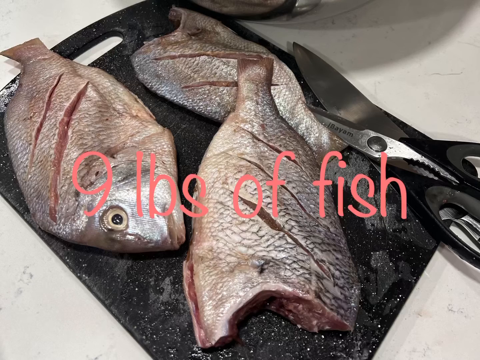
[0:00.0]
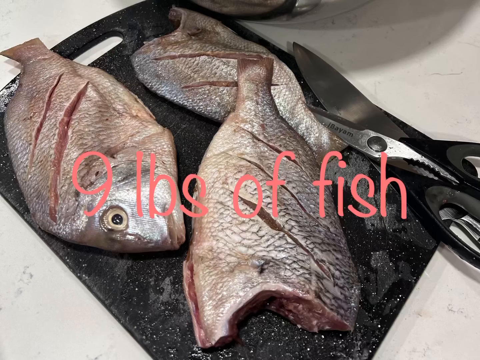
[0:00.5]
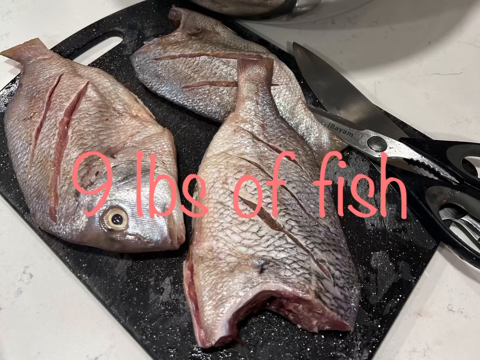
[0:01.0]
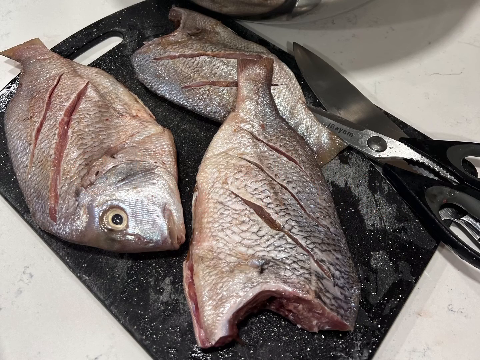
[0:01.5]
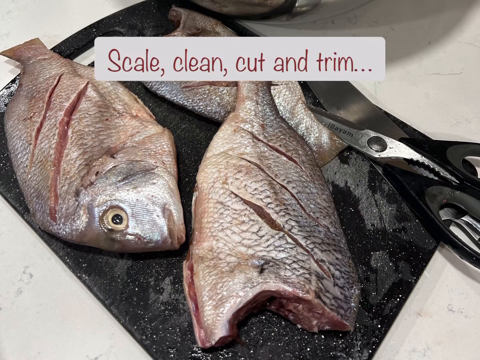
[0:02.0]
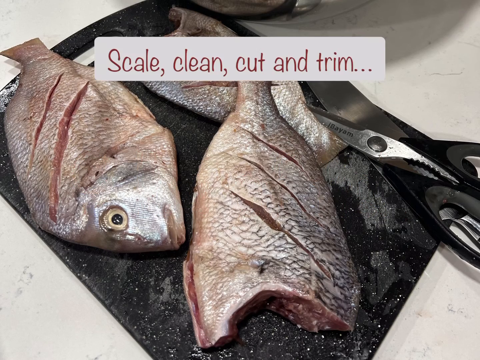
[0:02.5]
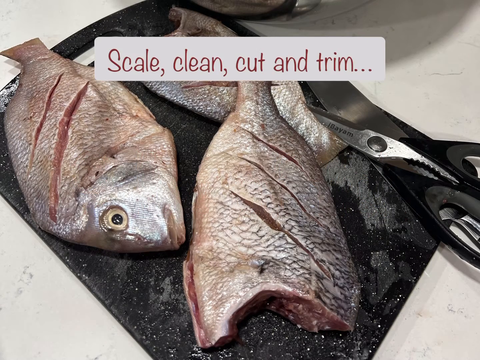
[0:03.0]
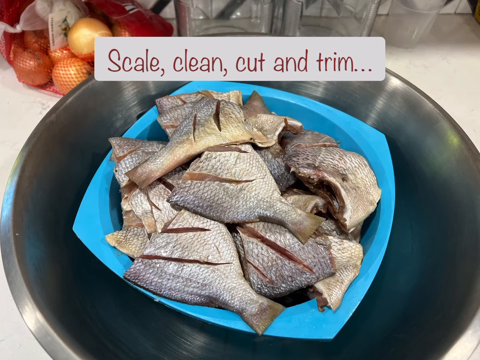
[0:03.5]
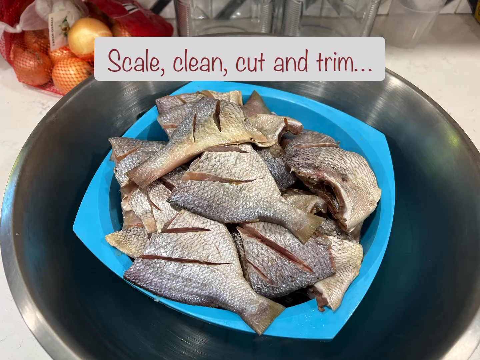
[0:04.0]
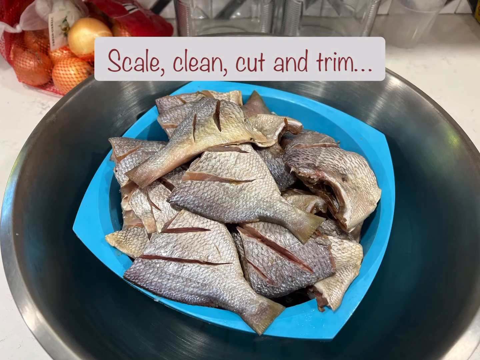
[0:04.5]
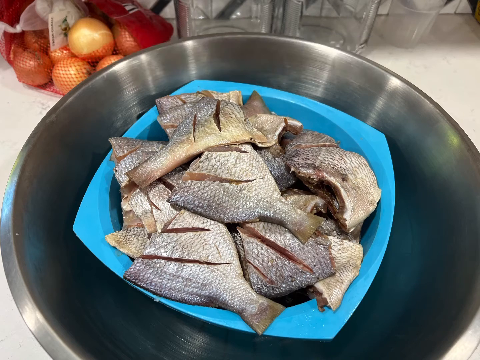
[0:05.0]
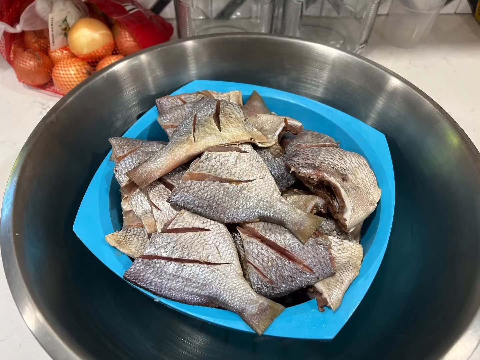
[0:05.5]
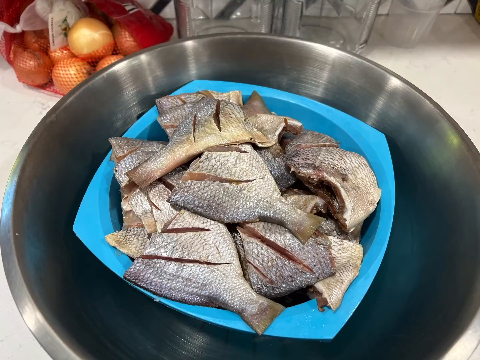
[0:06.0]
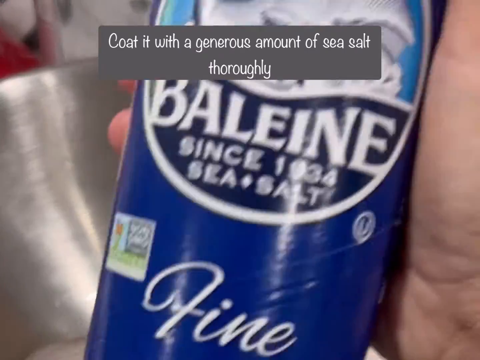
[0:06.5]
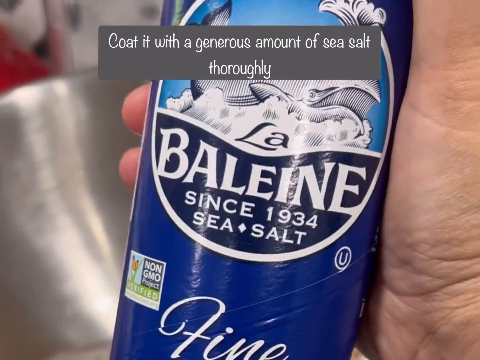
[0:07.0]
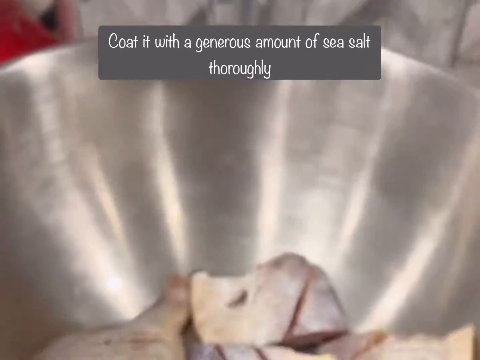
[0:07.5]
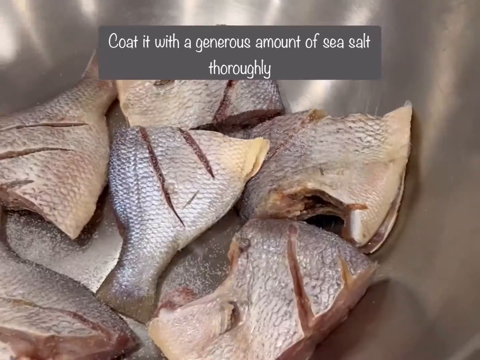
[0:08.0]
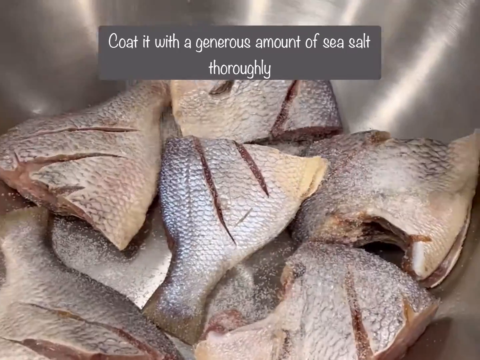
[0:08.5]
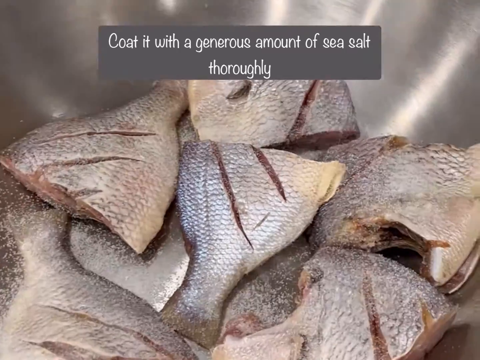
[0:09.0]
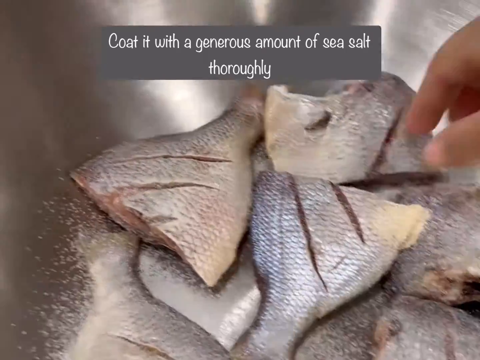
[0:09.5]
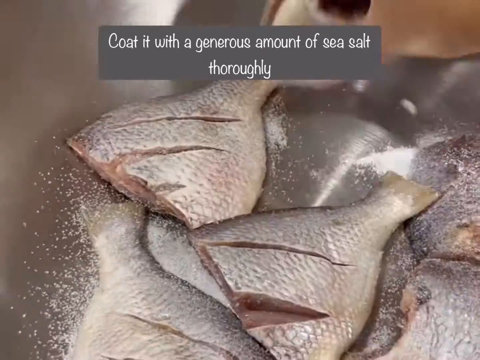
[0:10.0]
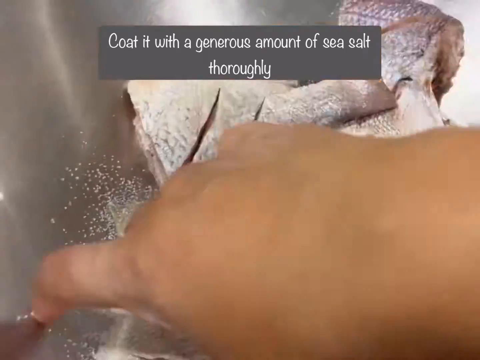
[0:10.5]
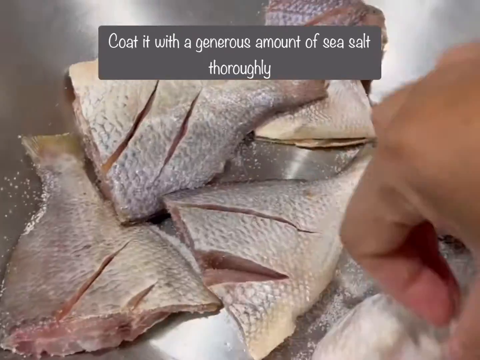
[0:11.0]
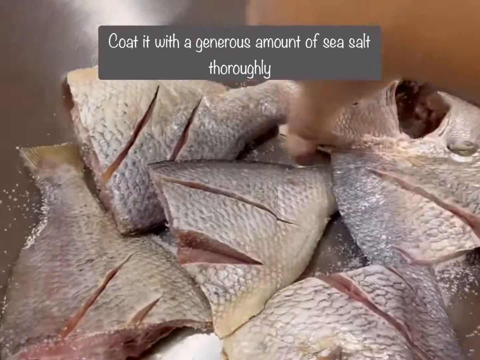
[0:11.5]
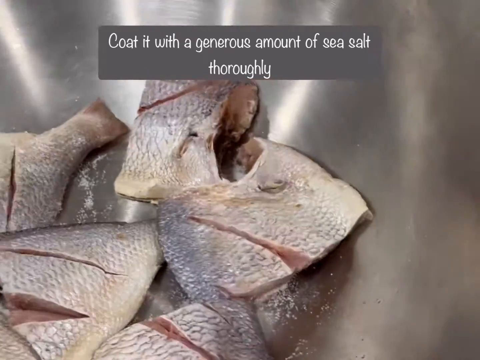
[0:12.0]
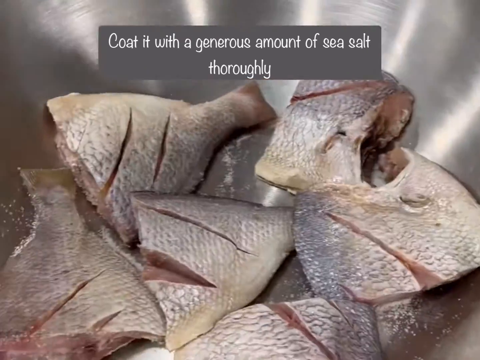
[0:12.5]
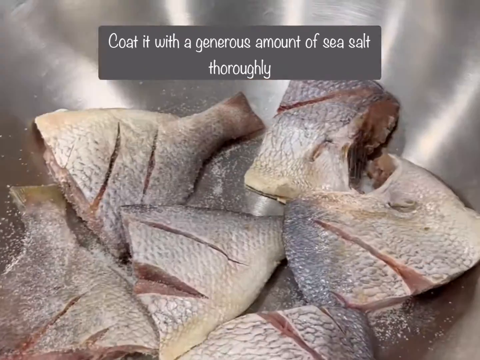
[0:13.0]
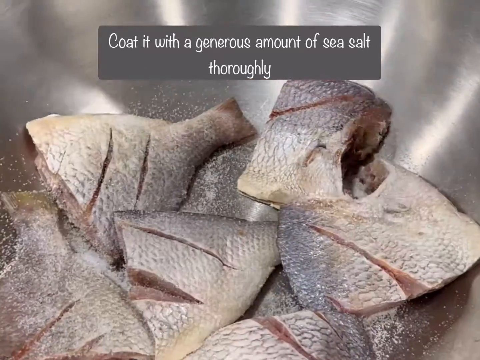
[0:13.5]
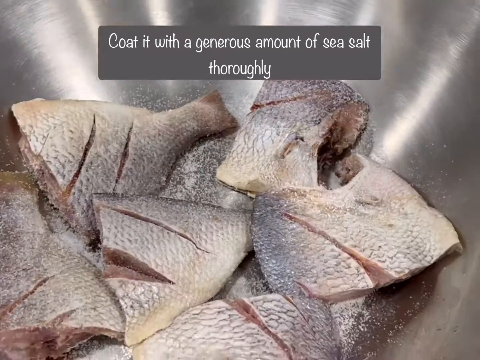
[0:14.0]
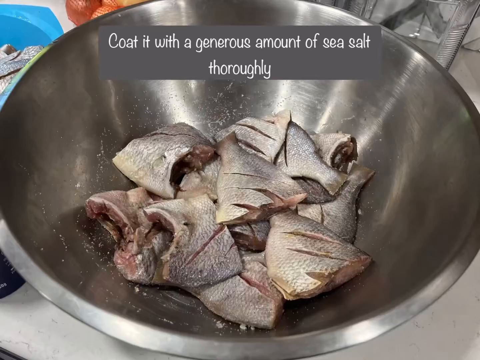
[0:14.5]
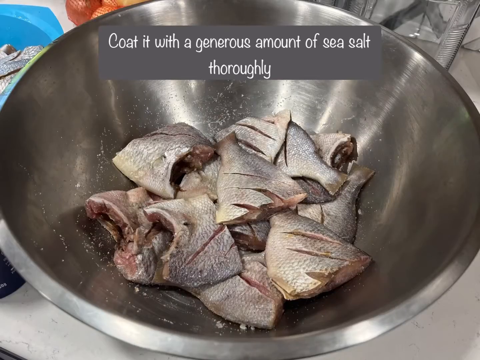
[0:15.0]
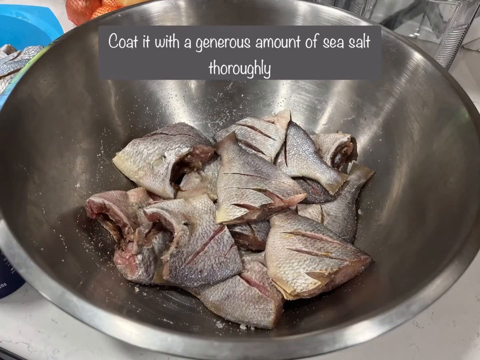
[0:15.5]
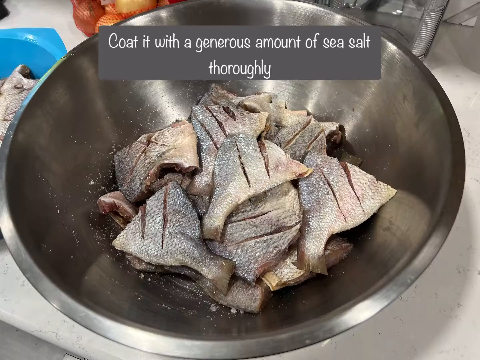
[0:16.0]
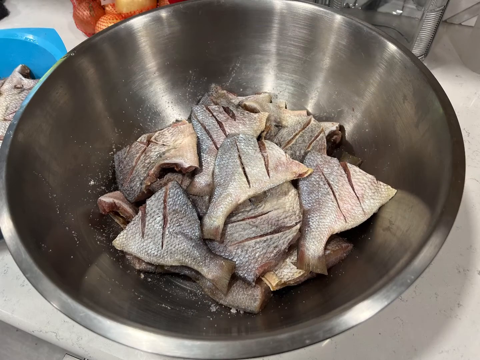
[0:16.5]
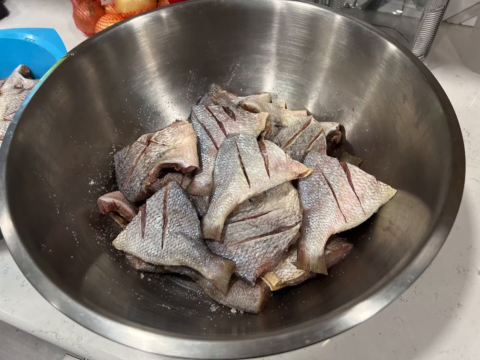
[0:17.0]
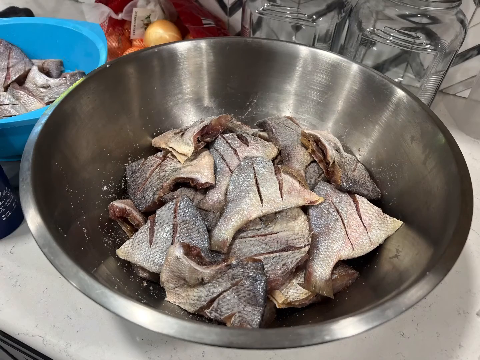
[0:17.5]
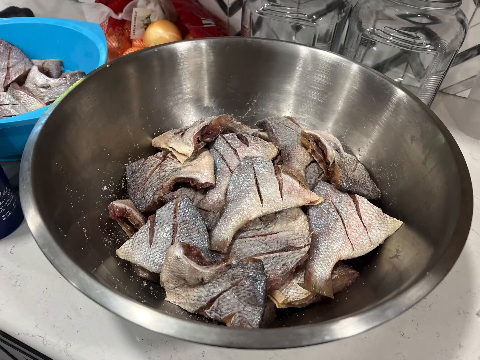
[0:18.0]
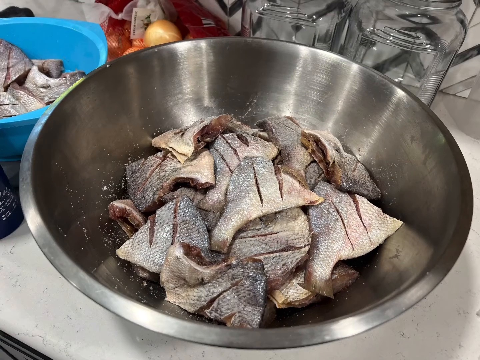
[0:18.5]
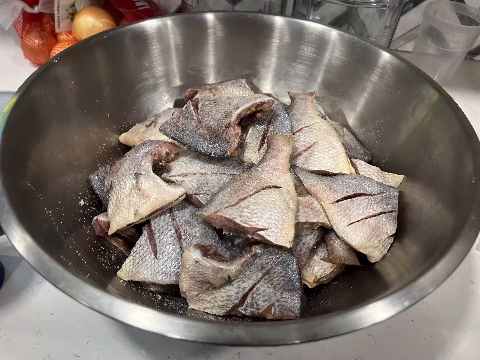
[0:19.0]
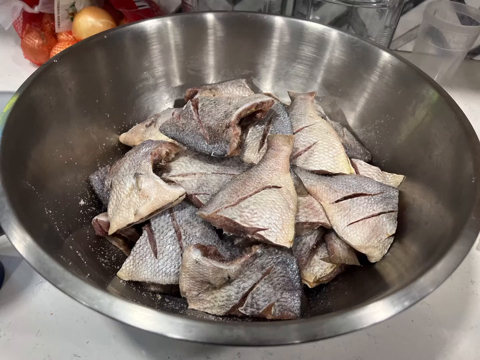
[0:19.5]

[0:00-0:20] The video concerns some sort of recipe for fish. The raw fish is shown being initially prepared in a big silver bowl, going from whole to cut up into pieces, apparently in a kitchen. The setting changes little, moving from the bowl to the chopping board, and a text overlay explains what is happening throughout. At one point salt is added to the fish. A large pair of scissors is present, presumably used to cut the fish, although this is not shown. There seem to be three different fish included.